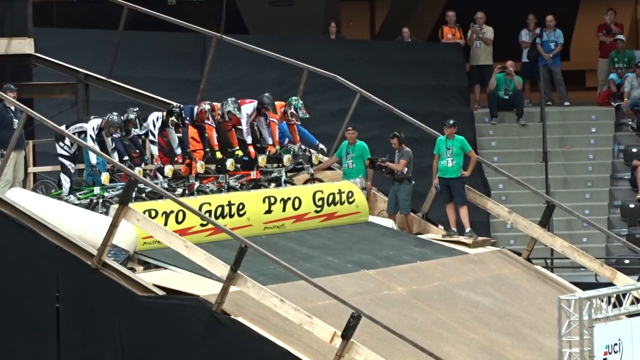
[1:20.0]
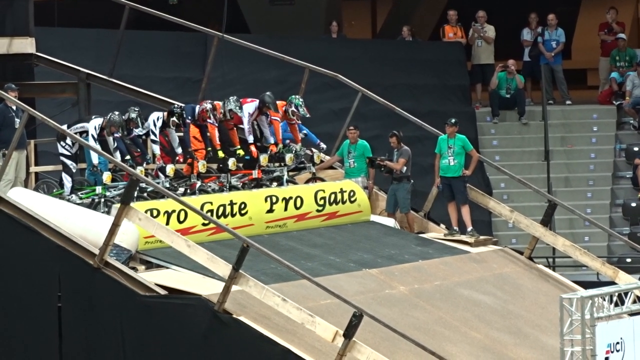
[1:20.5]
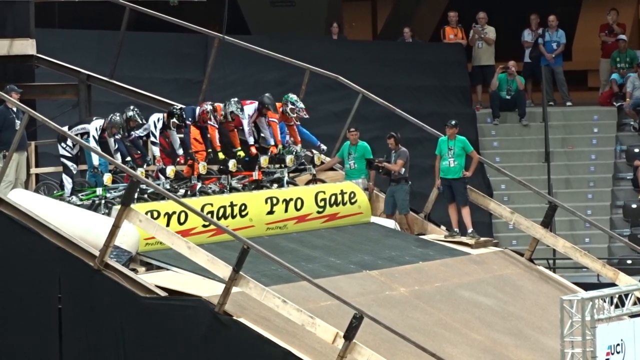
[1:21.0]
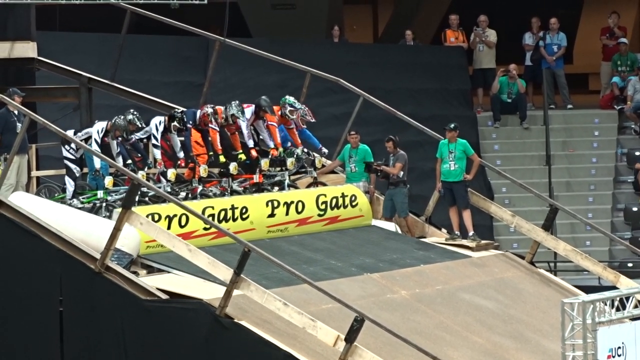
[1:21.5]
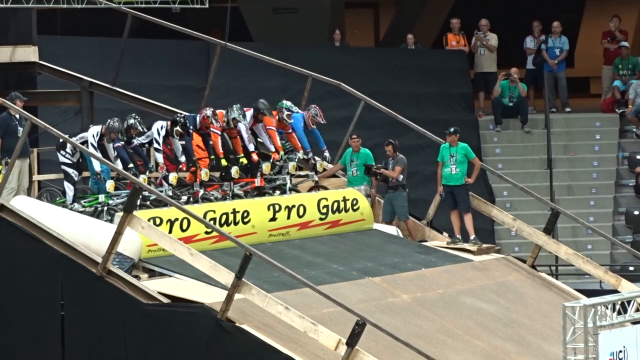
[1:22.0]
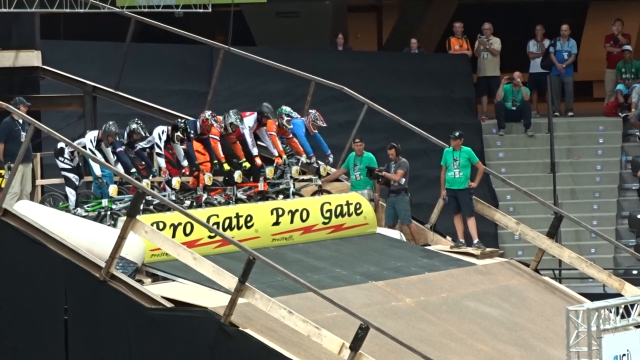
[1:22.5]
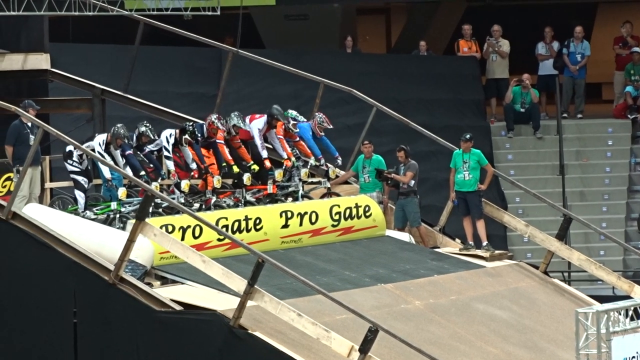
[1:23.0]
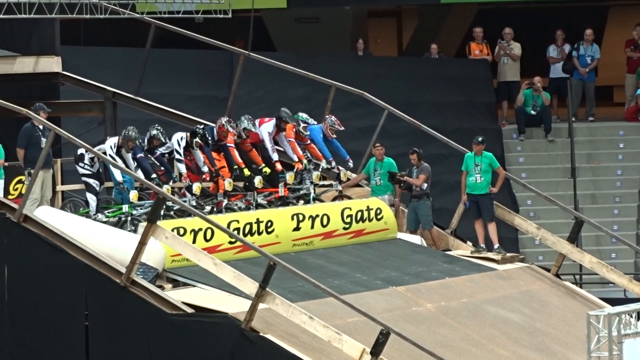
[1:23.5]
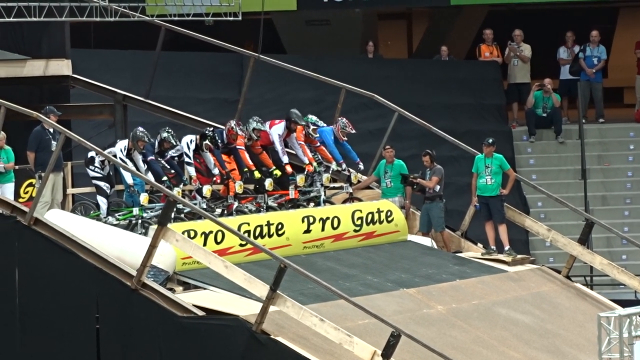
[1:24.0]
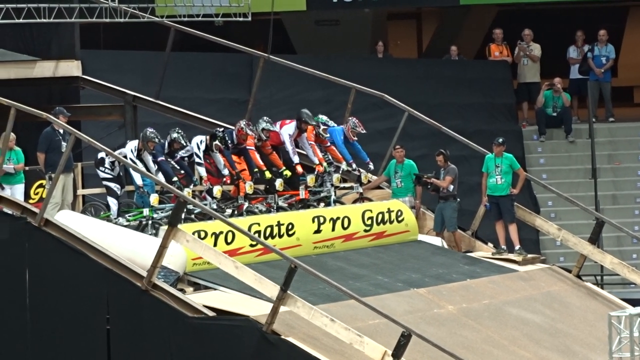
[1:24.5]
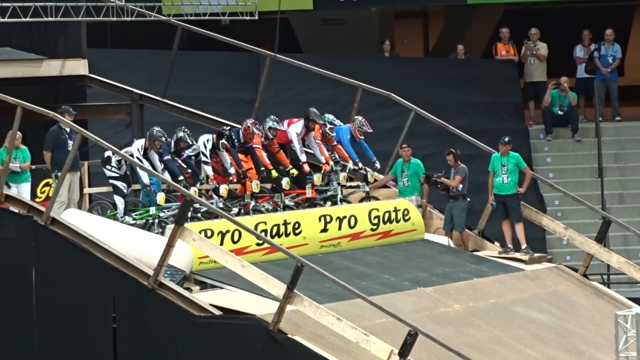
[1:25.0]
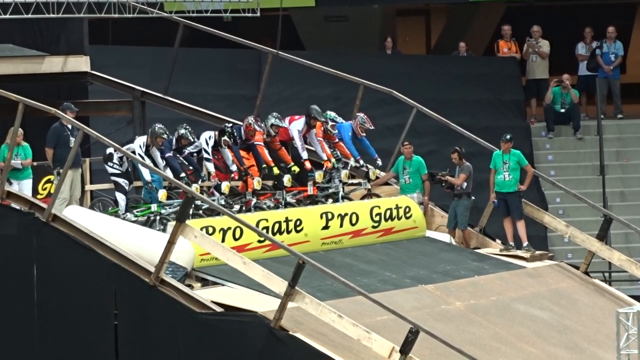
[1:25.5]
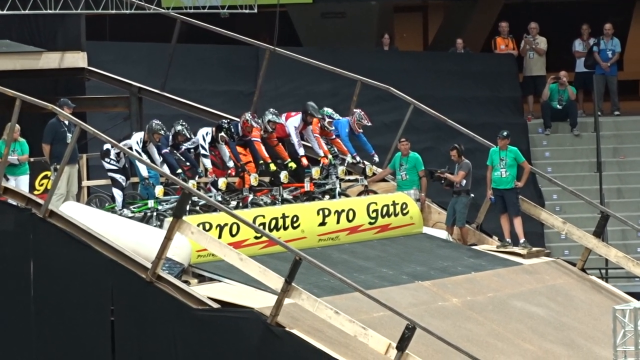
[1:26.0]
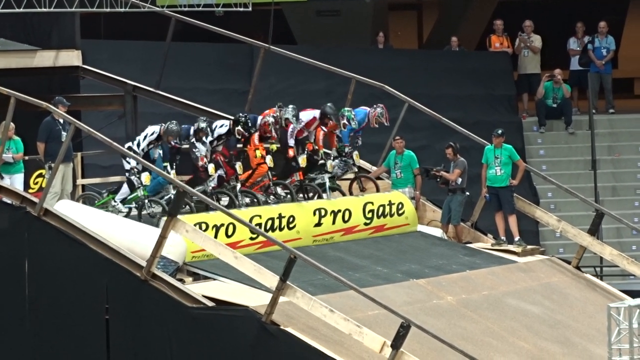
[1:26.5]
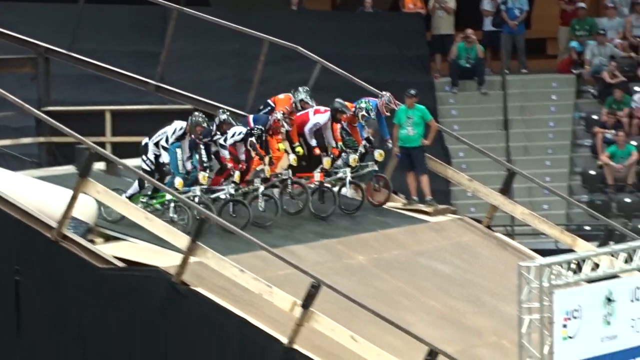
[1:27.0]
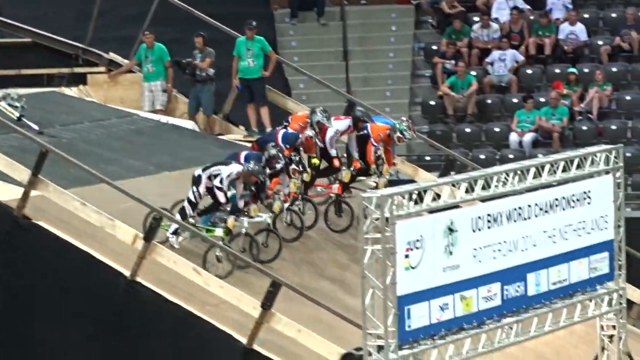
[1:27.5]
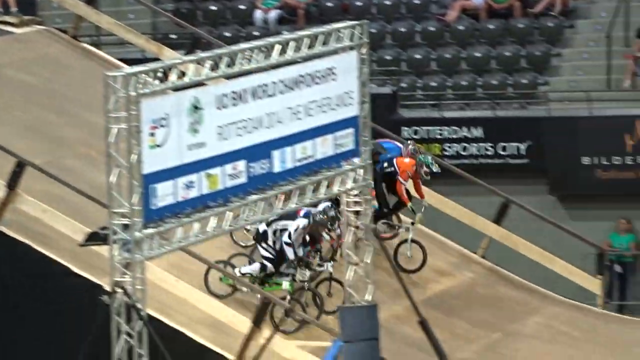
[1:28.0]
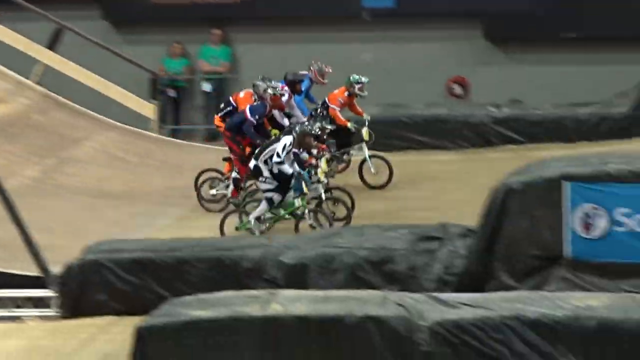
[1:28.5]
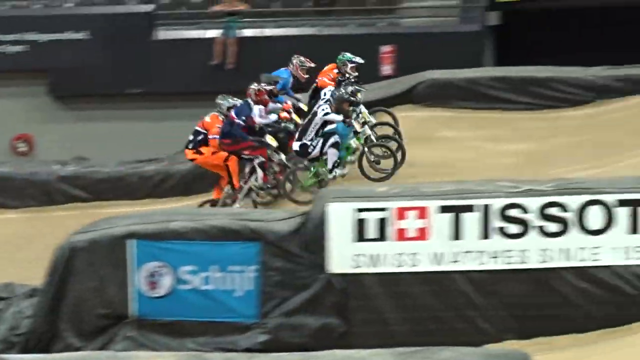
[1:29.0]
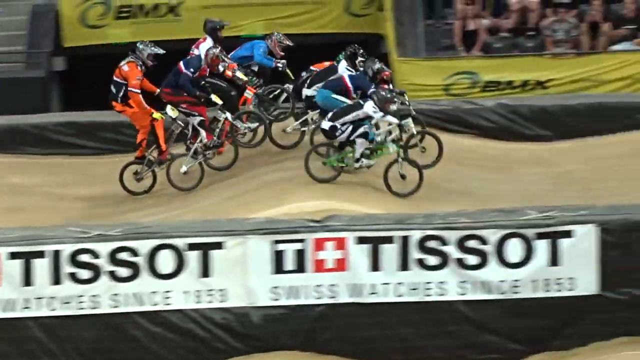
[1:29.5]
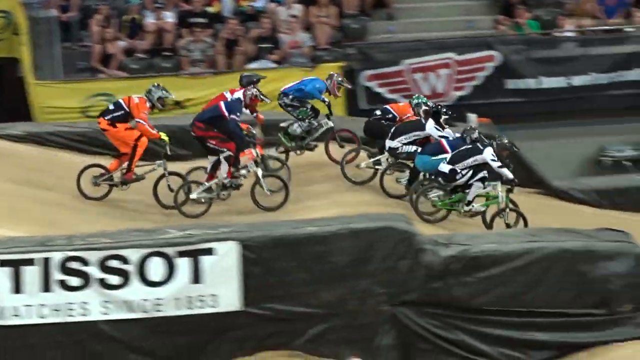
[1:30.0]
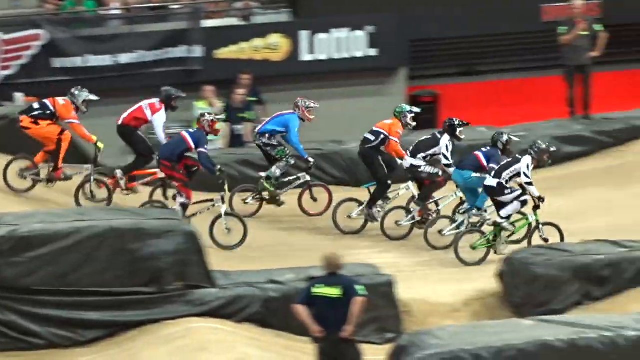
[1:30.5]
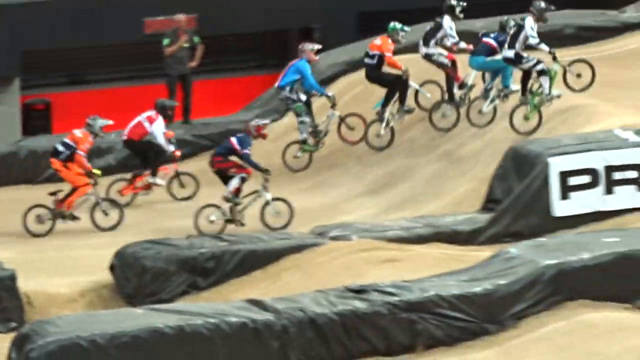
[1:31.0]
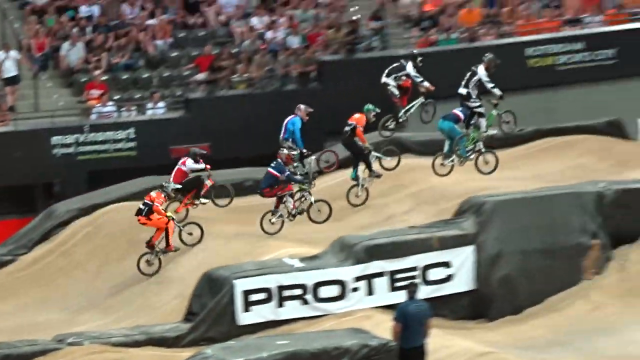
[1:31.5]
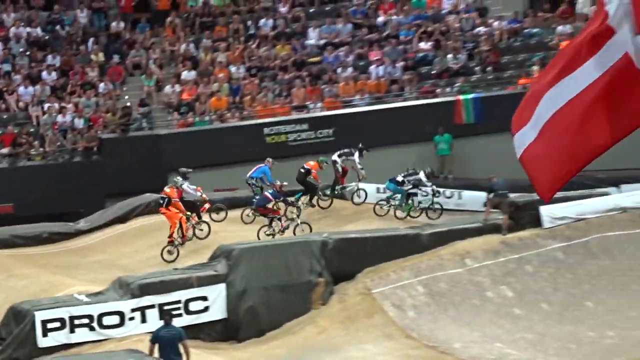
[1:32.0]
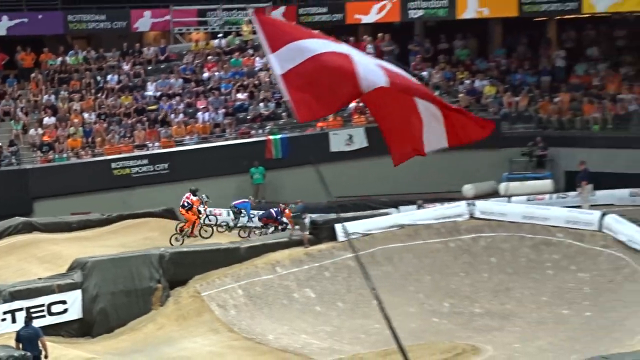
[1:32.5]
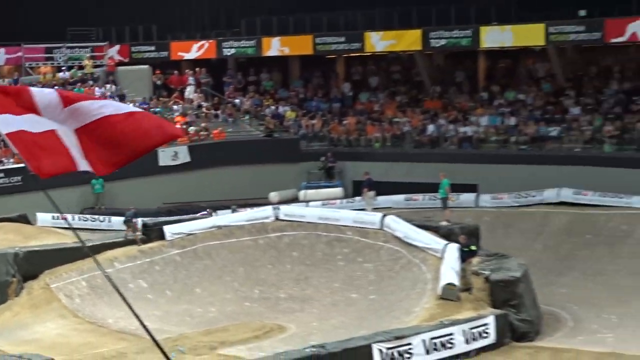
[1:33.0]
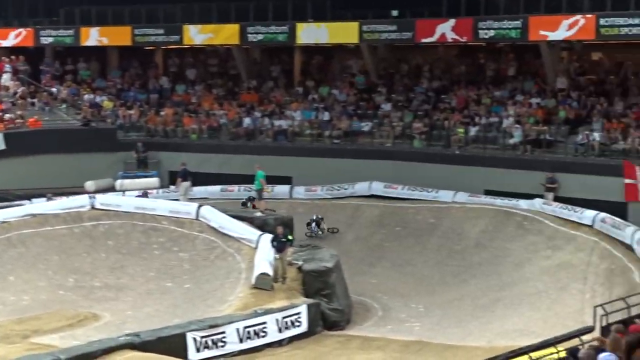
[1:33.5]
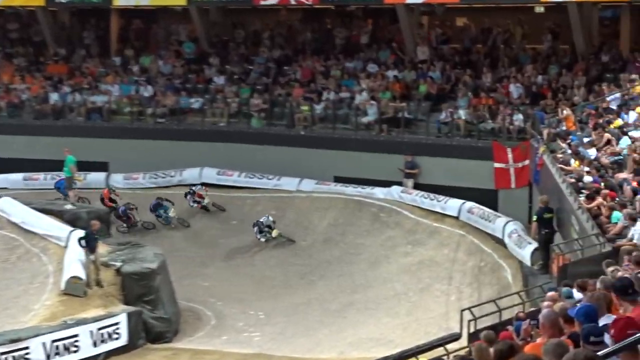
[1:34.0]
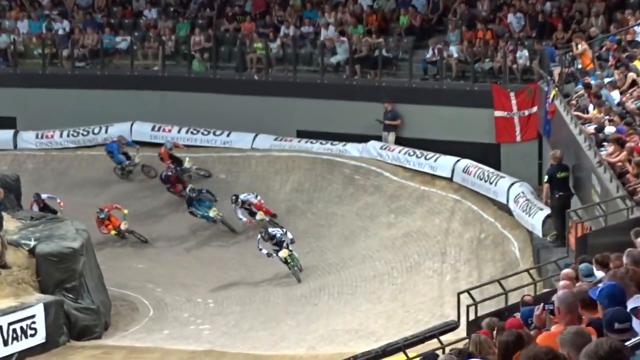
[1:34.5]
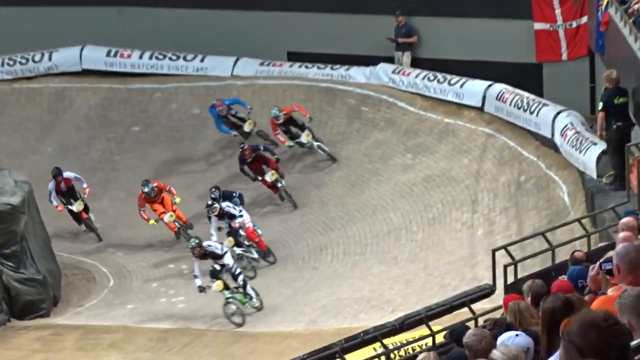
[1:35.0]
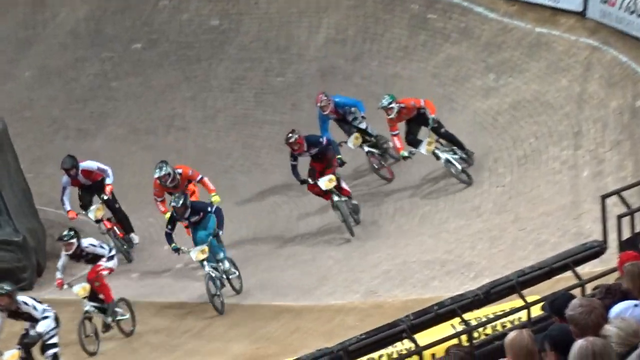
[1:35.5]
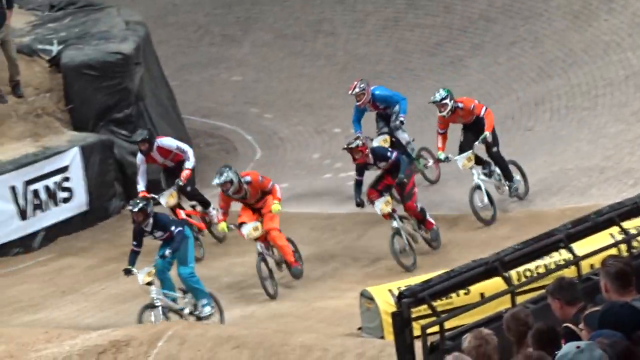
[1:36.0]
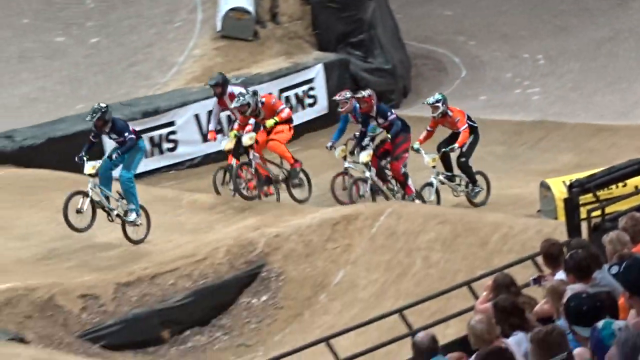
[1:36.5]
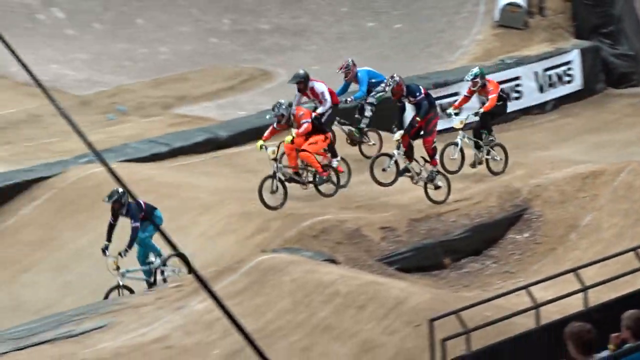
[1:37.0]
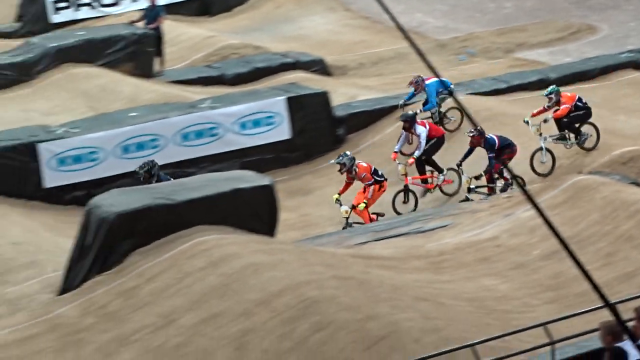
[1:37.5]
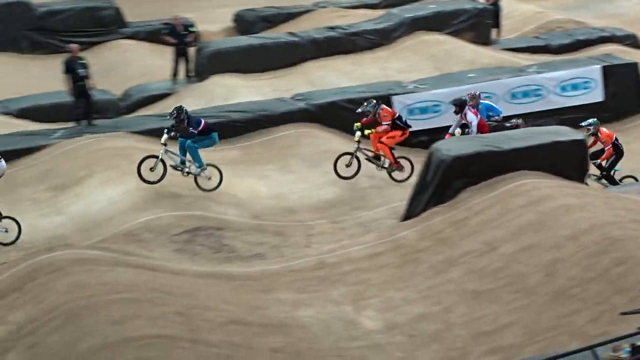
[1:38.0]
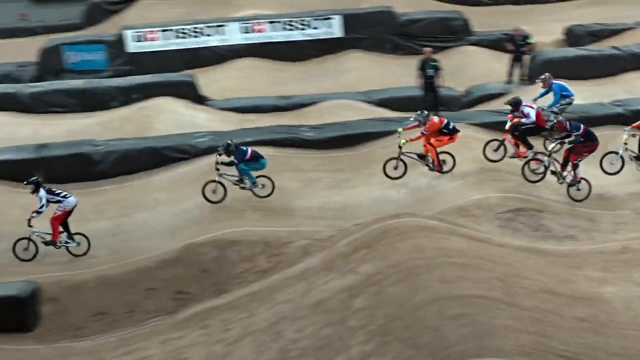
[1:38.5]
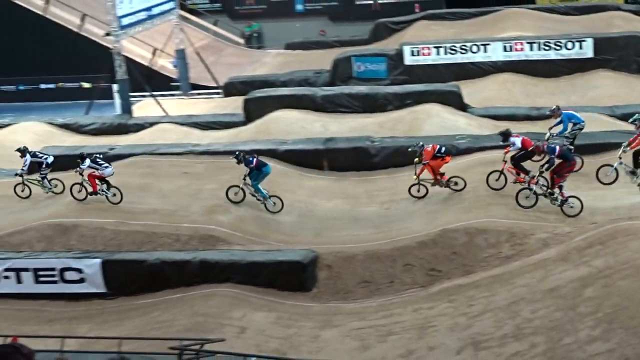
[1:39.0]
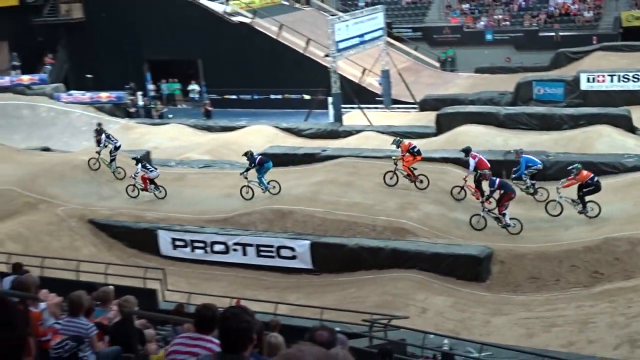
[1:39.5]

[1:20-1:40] The bikers are still getting ready. Then all the bikers go over the humps, riding very fast and flying around the corners. Most of them look very determined to finish the race quickly and to be the winner.